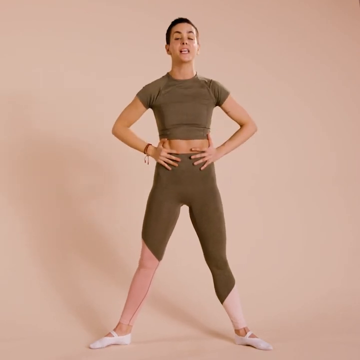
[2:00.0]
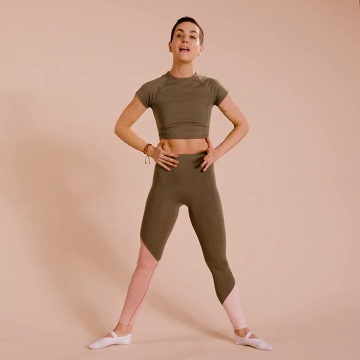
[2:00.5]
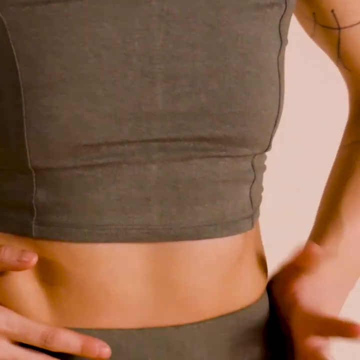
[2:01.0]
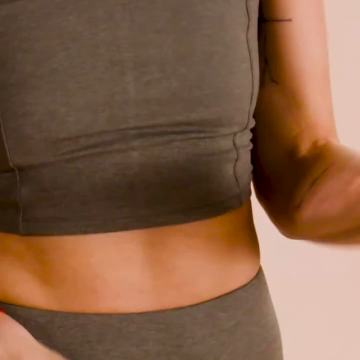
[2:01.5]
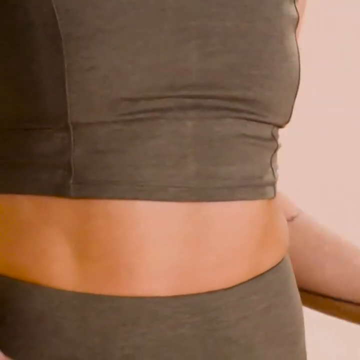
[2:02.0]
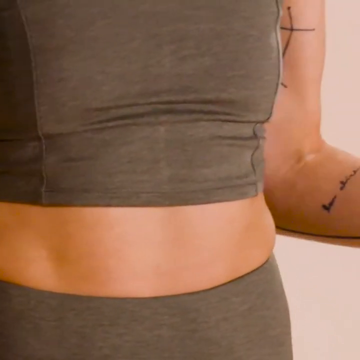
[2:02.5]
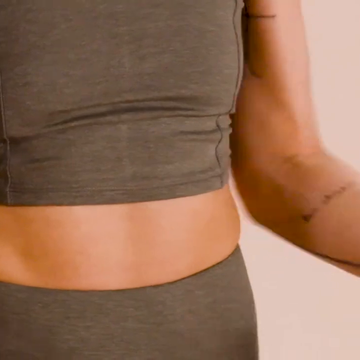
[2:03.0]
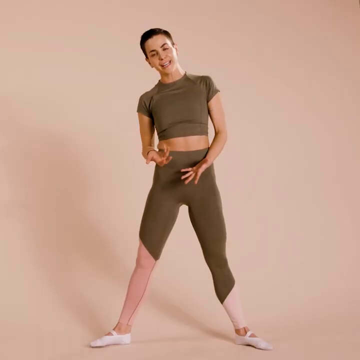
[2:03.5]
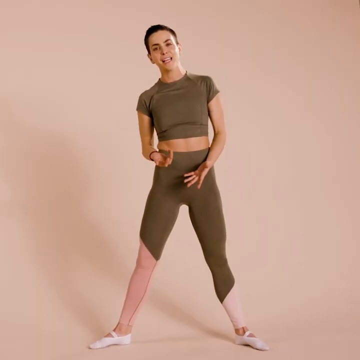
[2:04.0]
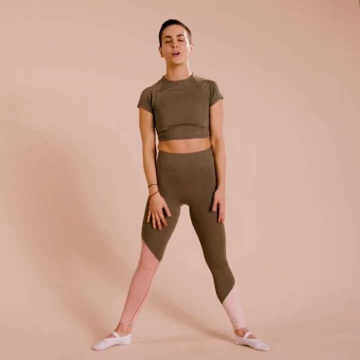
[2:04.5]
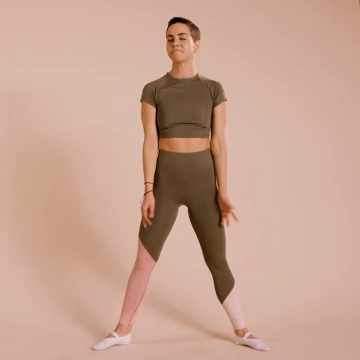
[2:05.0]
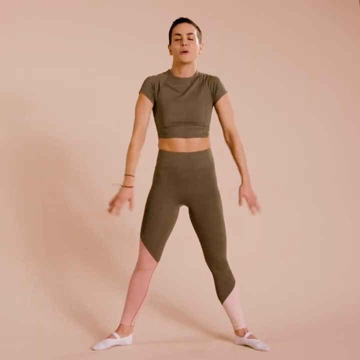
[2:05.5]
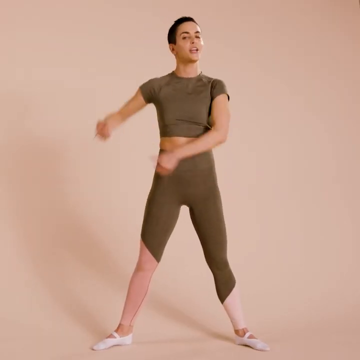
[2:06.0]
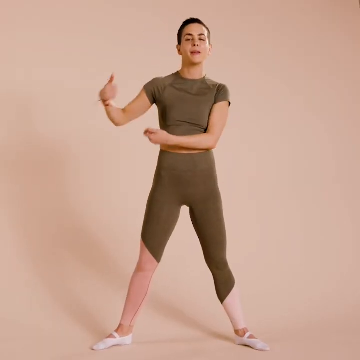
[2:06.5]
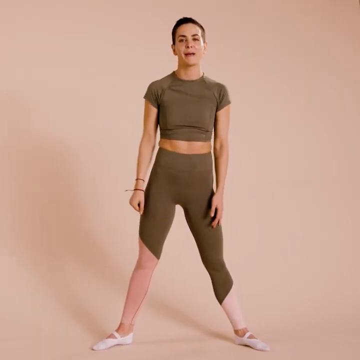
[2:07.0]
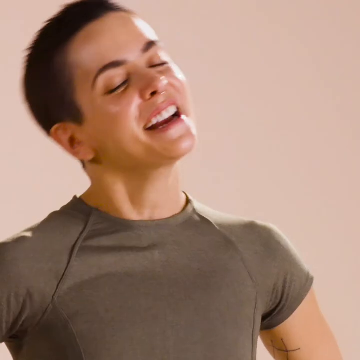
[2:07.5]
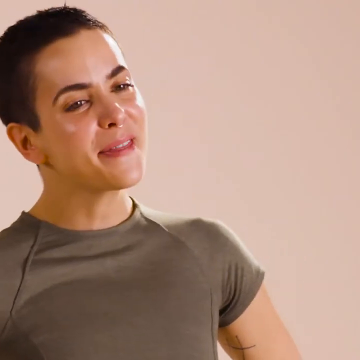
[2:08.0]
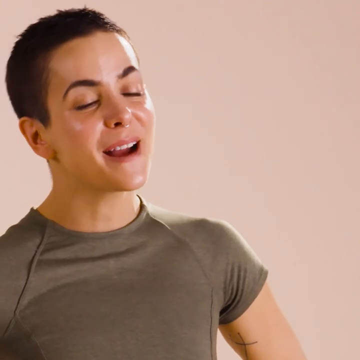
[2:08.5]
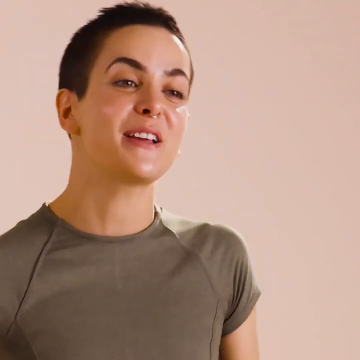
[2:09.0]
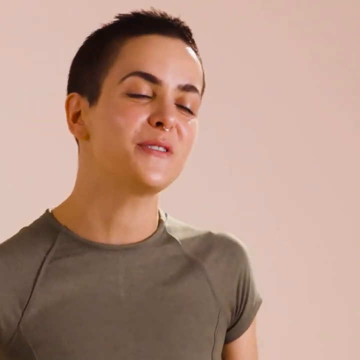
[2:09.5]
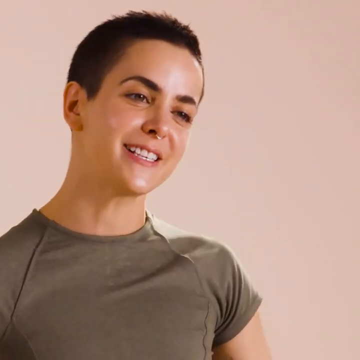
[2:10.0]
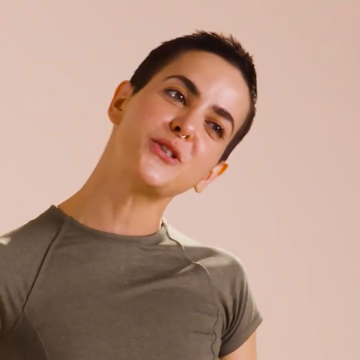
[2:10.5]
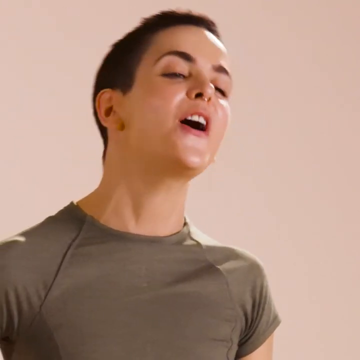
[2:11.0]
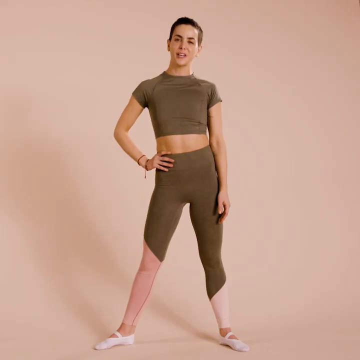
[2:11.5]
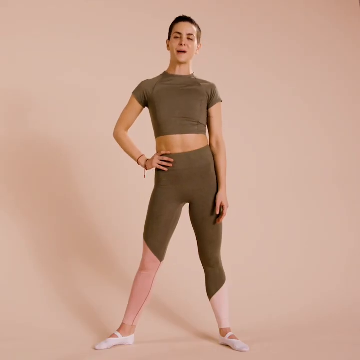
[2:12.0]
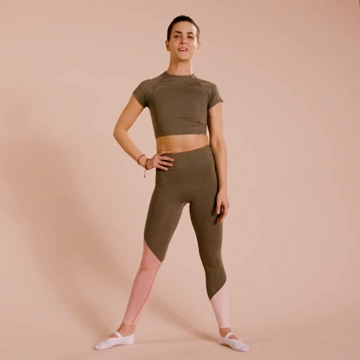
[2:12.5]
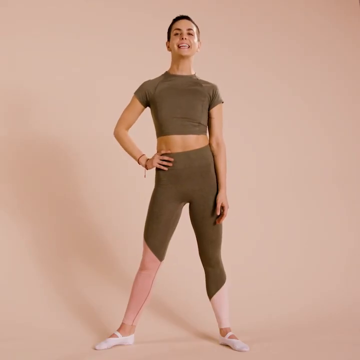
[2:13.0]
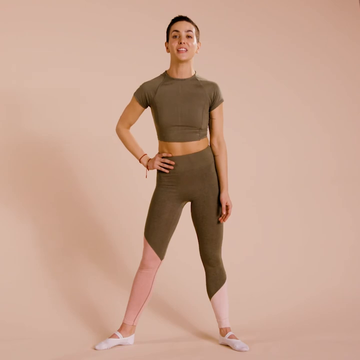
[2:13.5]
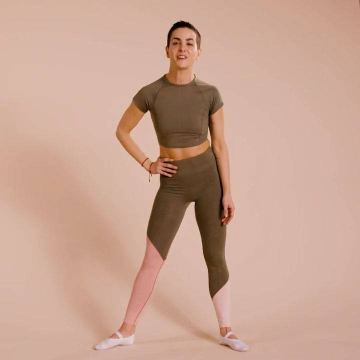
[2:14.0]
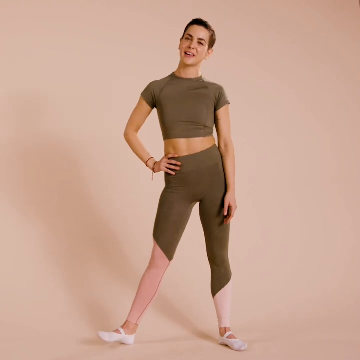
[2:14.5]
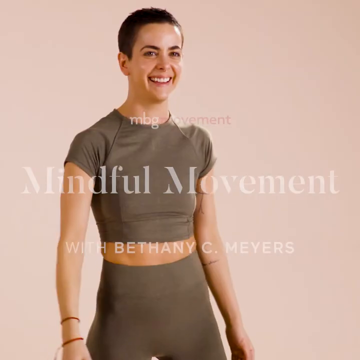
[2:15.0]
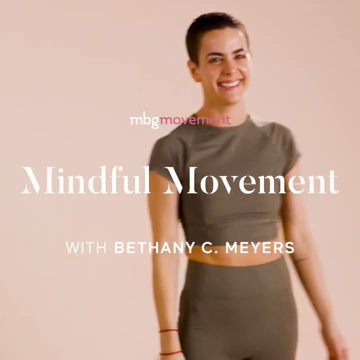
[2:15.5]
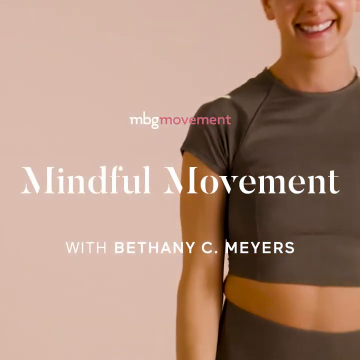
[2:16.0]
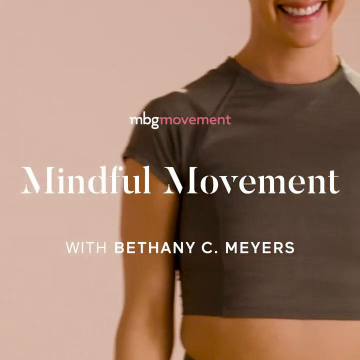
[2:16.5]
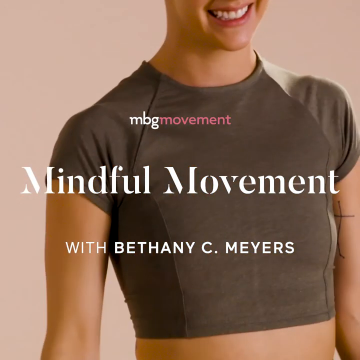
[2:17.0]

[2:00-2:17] With her hands on her stomach, the shot goes from wide to a close-up of her abs. She continues making talking motions, then the camera goes wide again and she leans slightly toward the right as she speaks; when she returns to the center, her arms go back down in front of her. She shrugs with both hands on her shoulders, then brings up her hands and points her right thumb behind her with a swinging motion, and her hands rest in front of her again. The camera then shows a close-up of her face as she keeps speaking to the camera, her head sometimes nodding to the left. The next shot is a wide shot of her full body, leaning on her left hip with her right hand on her right hip and her left hand relaxed against the left side of her body. The final shot is b-roll of her laughing in the studio with overlaid text reading "MBG Movement" and the title "Mindful Movement with Bethany C. Myers".